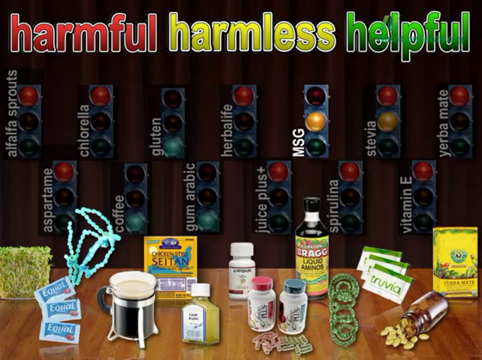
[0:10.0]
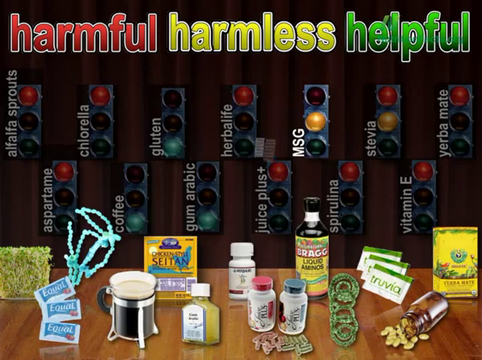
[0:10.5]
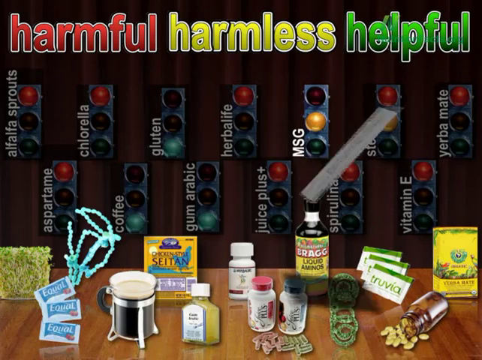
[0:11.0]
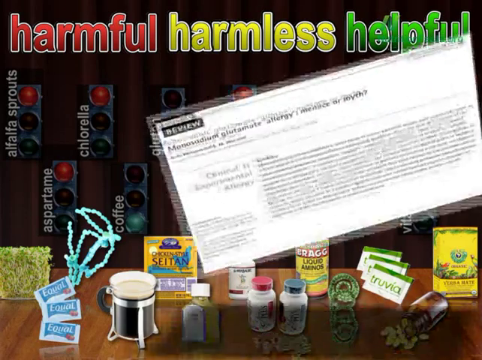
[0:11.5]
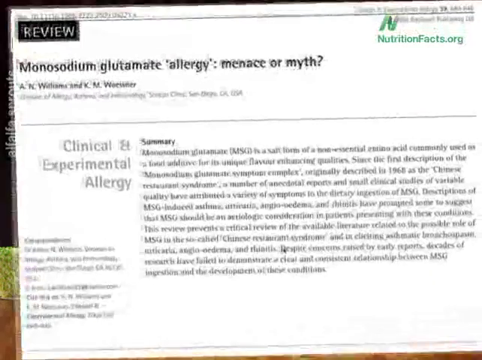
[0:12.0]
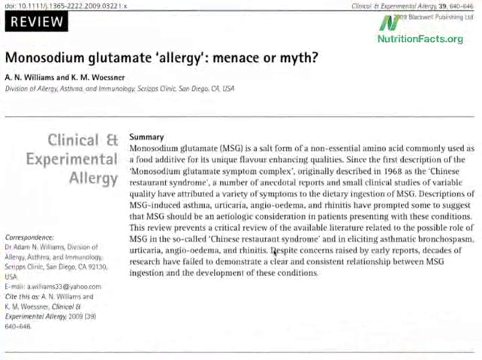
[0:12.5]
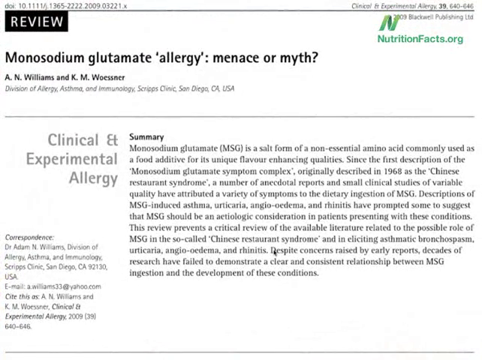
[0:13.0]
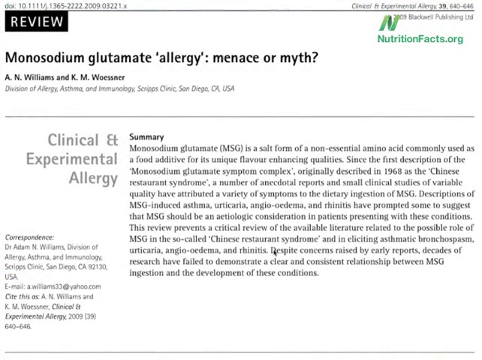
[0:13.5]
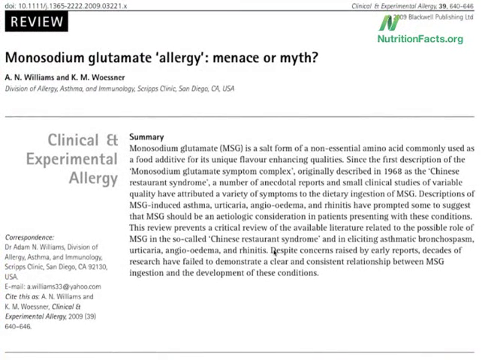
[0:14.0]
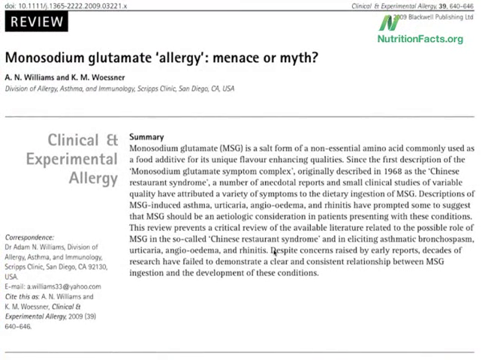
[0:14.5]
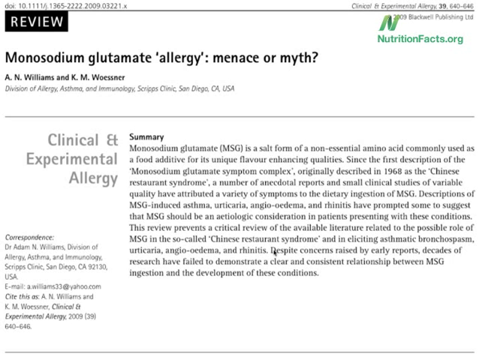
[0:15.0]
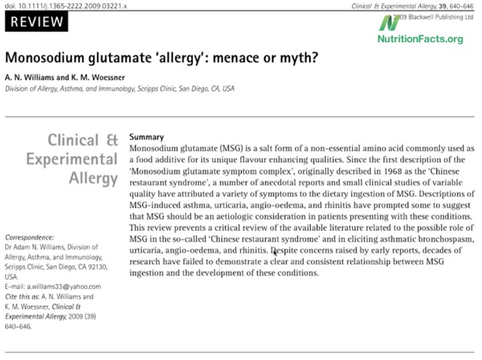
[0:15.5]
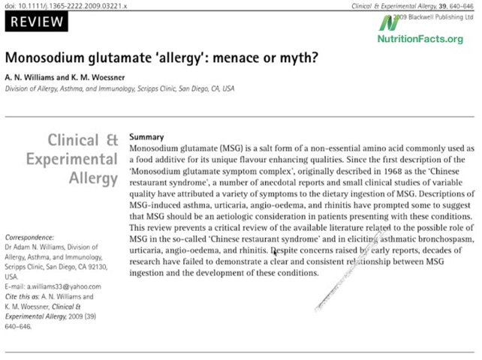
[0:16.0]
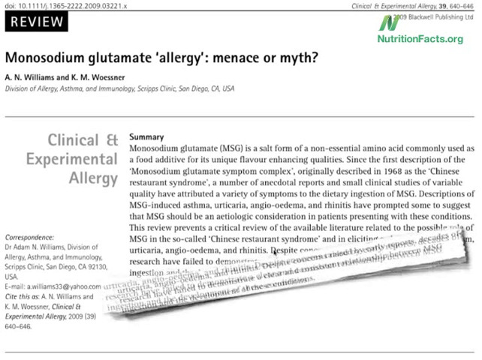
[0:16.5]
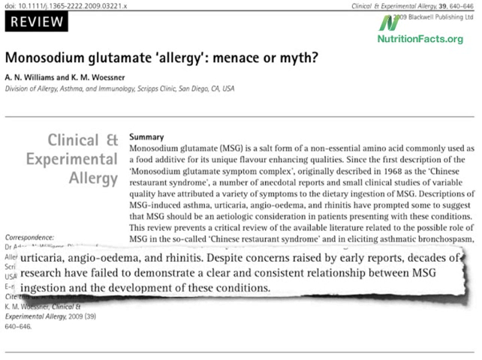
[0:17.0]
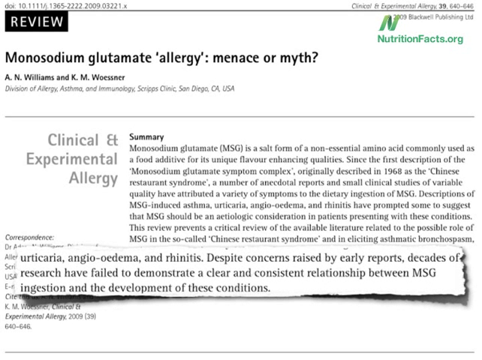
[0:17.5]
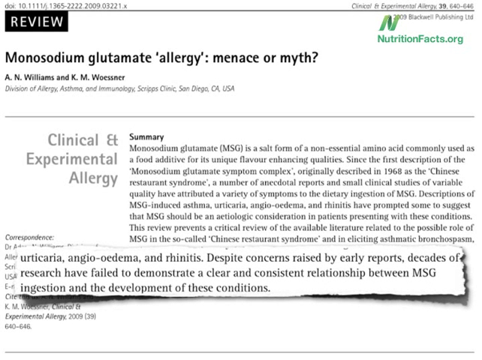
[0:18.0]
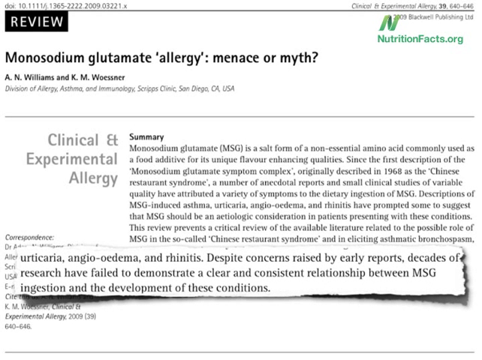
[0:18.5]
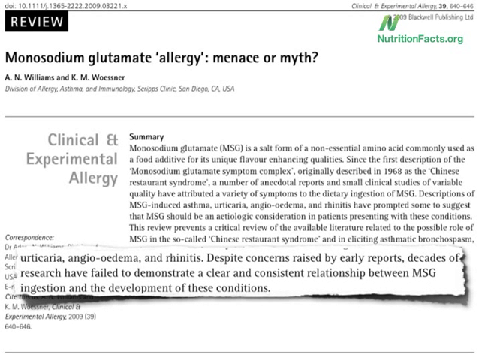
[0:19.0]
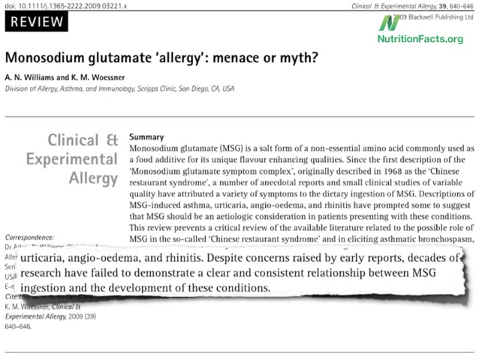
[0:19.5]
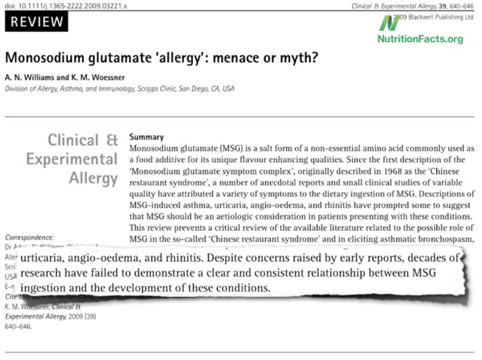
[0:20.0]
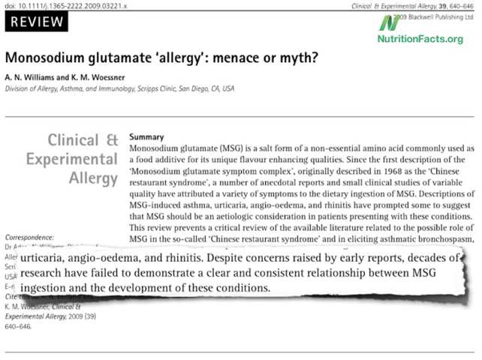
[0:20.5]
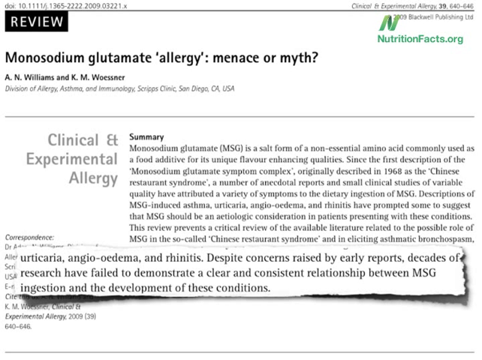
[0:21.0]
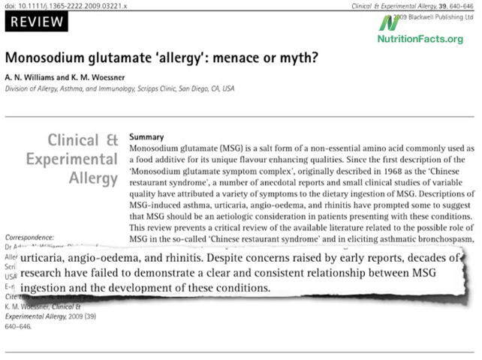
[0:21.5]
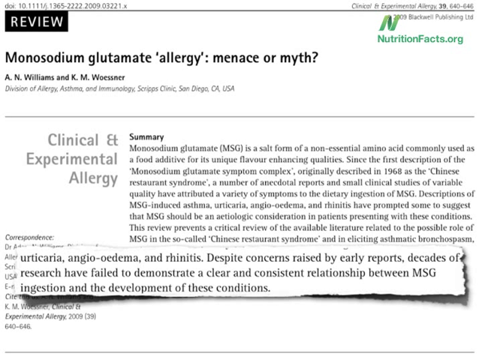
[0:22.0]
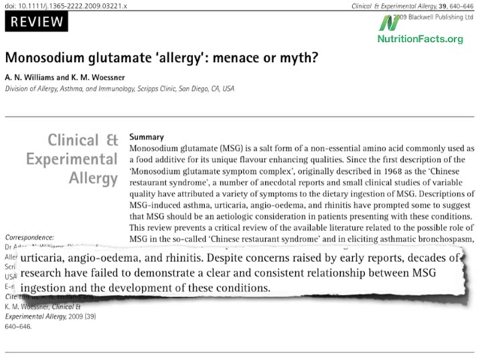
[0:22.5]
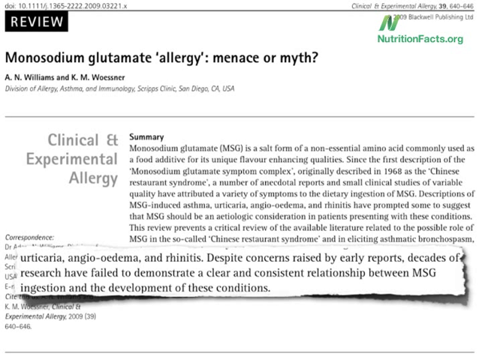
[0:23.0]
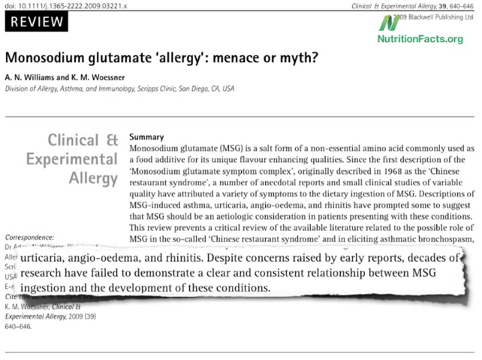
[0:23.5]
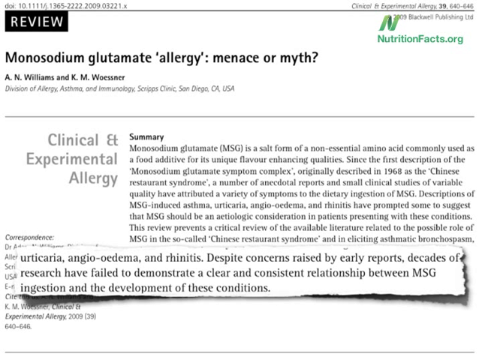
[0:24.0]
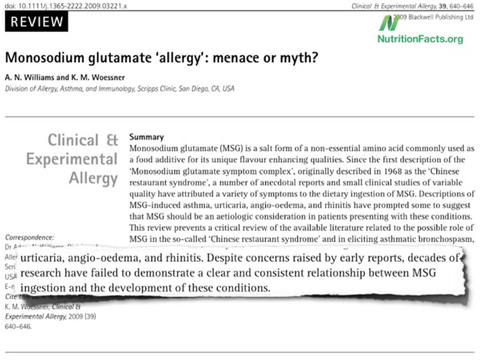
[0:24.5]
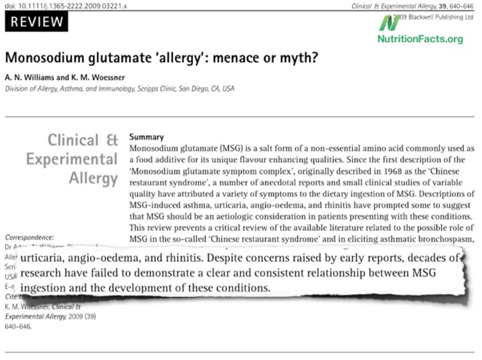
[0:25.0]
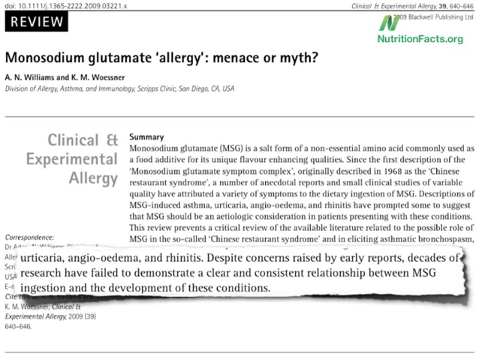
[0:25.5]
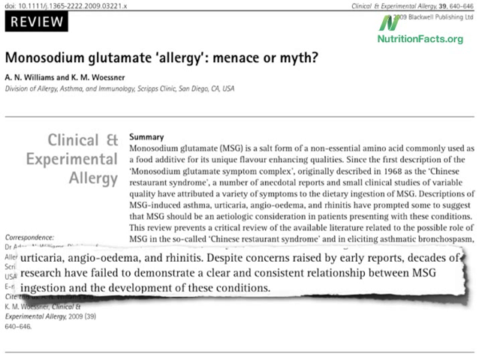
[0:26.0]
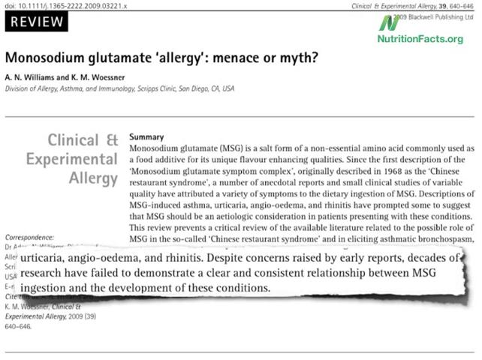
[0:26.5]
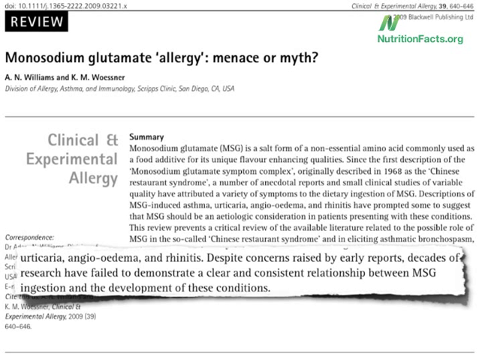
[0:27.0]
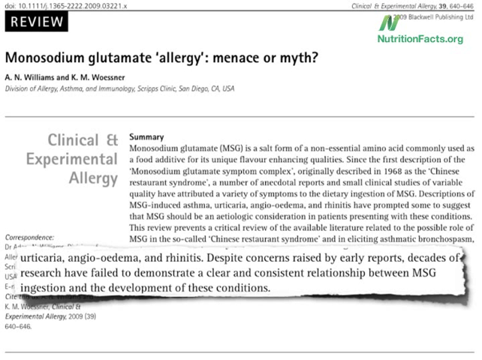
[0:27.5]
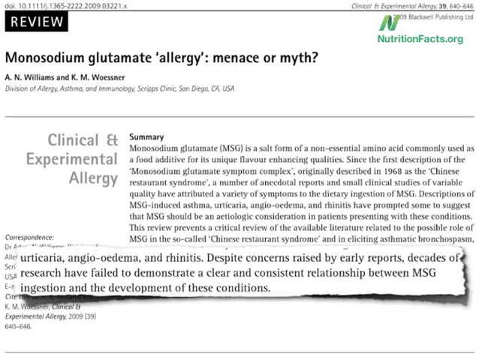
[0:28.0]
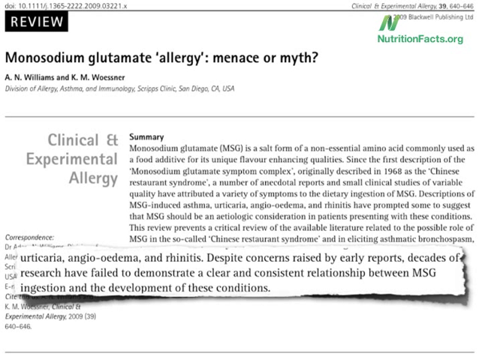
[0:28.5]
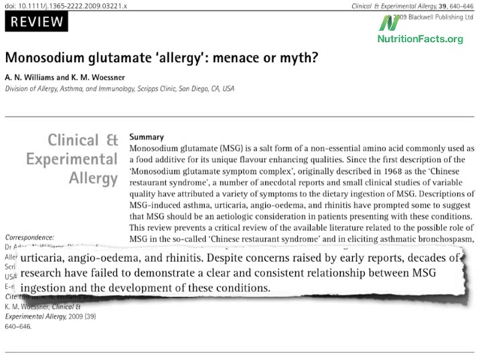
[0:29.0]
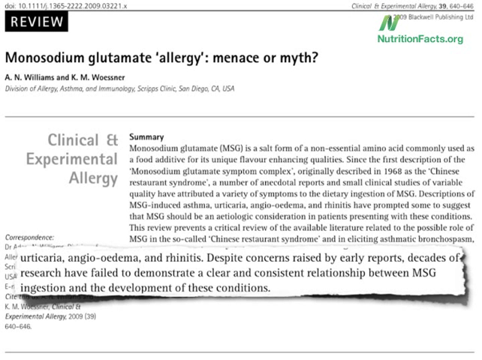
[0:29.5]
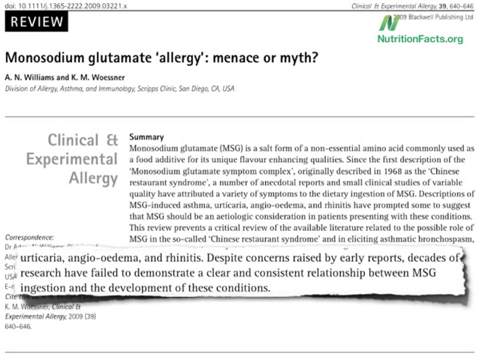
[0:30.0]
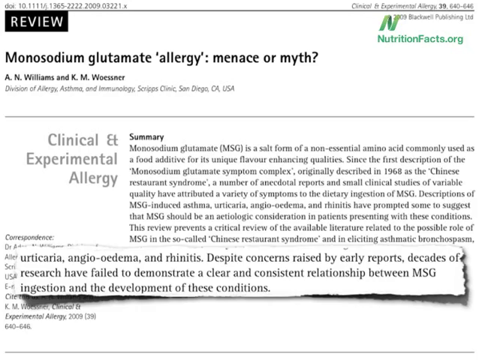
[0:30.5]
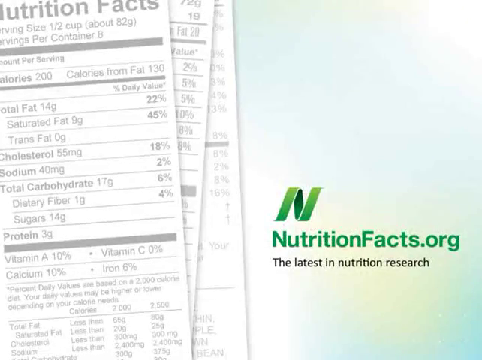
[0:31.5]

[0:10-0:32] This animated illustration of nutrition facts shows a screen with a deep dark brown background on which various food ingredients and additives are listed in two rows. The top row shows alfalfa sprouts, chlorella, gluten, abalone, MSG, stevia and yerba mate, and the second row below it shows aspartame, coffee, gum arabic, juice plus, spirulina and vitamin E. Each name is written beside a drawing of a traffic light with red, yellow and green. At the bottom is what looks like an illustration of a brown tabletop with various bottles of supplements on it. Next, a page with a white background and an article pops up. The article is labeled "NutritionFacts.org" with a green label in the upper right corner. Its title reads "Monosodium Glutamate, Allergy, Menace, or Myth", and further down the body is another header reading "Clinical Experimental Allergy". A piece of text then pops up out of the main body of the article.